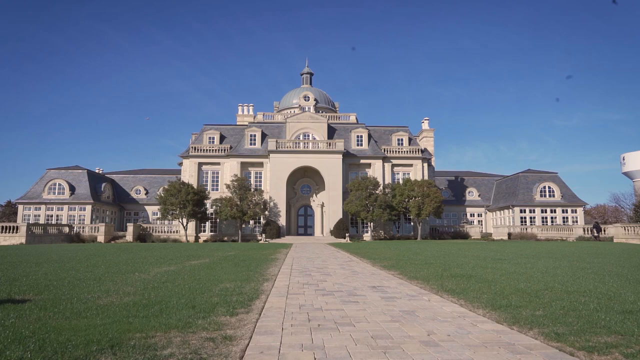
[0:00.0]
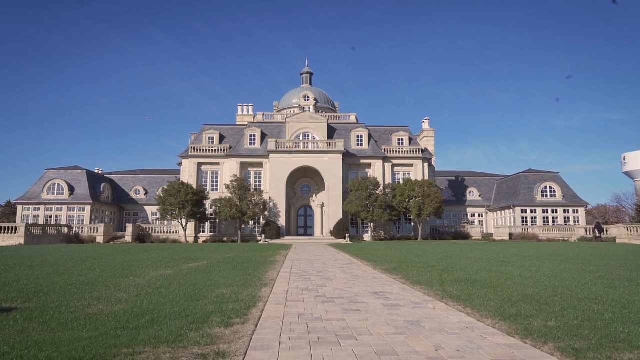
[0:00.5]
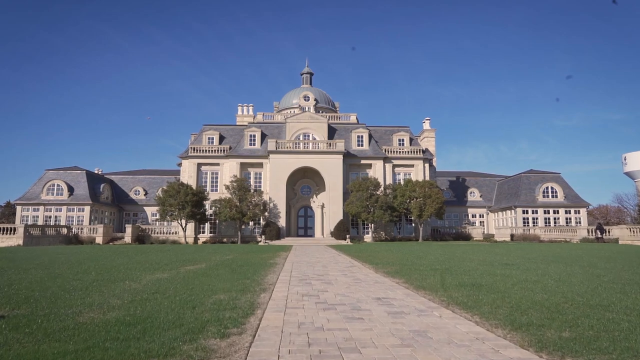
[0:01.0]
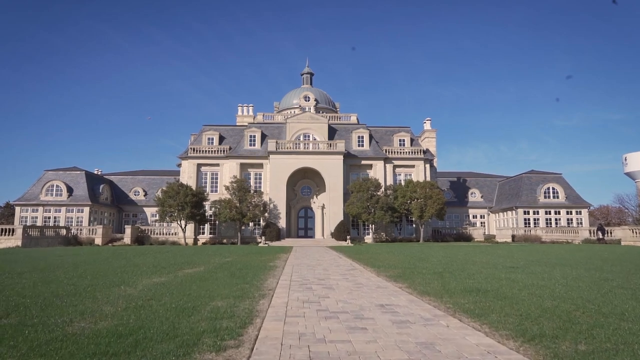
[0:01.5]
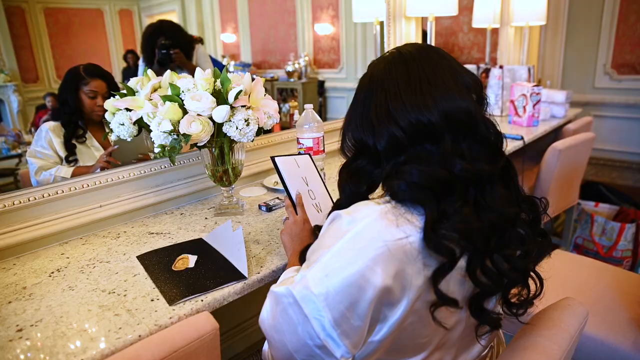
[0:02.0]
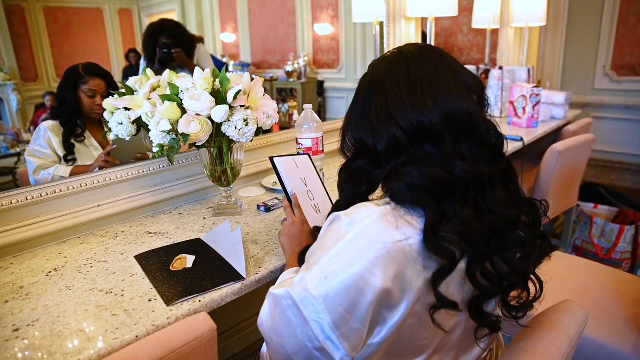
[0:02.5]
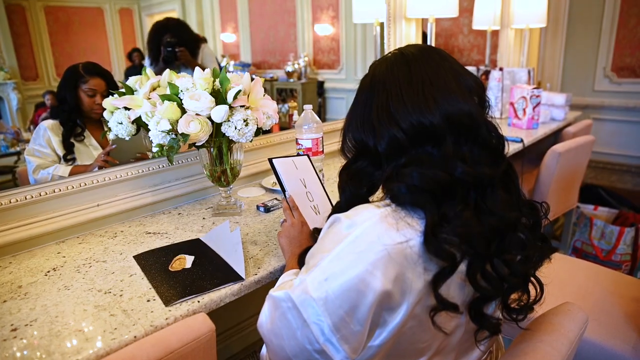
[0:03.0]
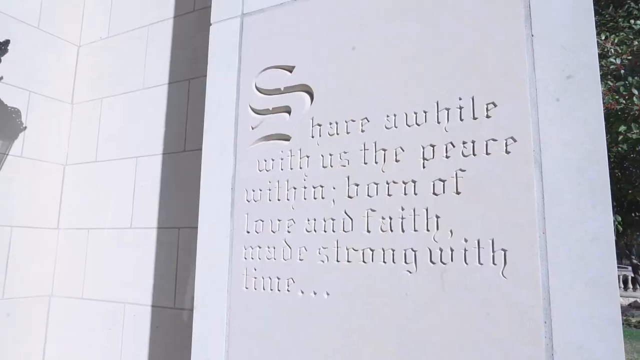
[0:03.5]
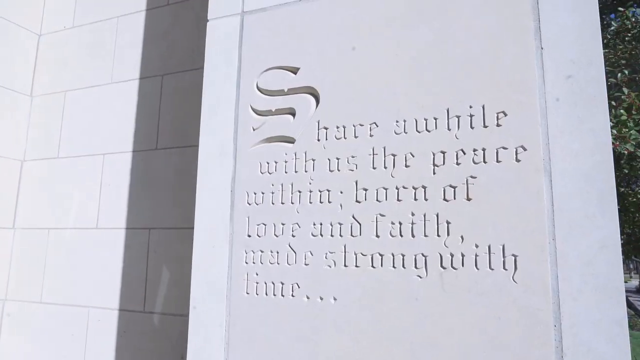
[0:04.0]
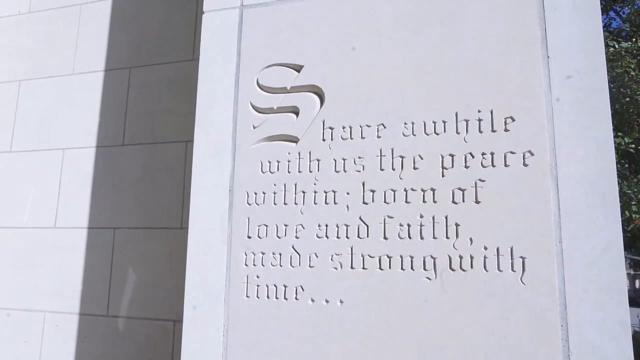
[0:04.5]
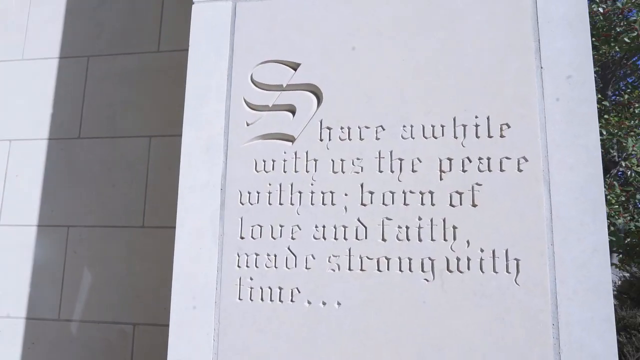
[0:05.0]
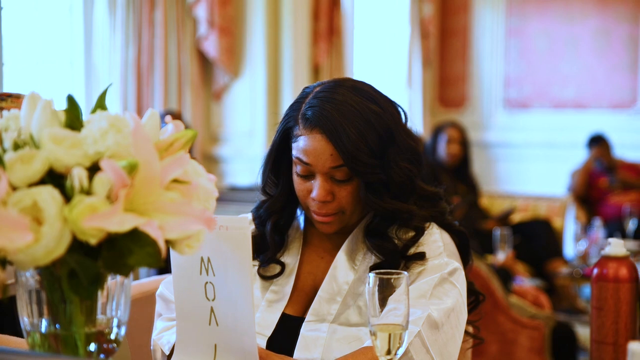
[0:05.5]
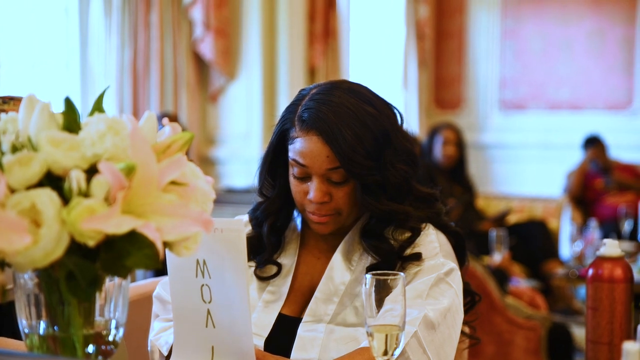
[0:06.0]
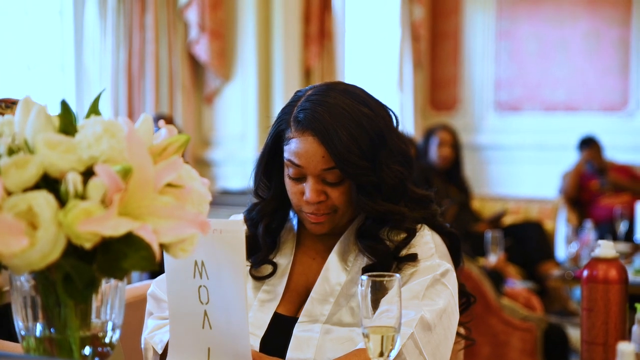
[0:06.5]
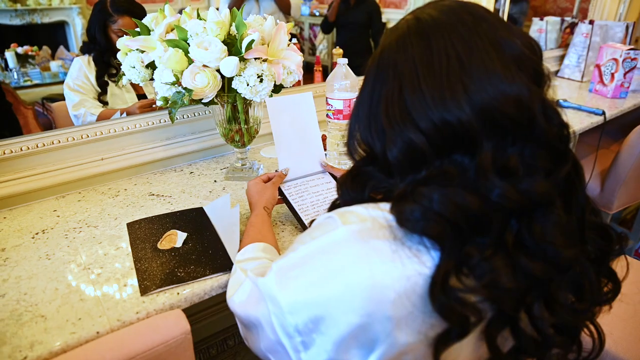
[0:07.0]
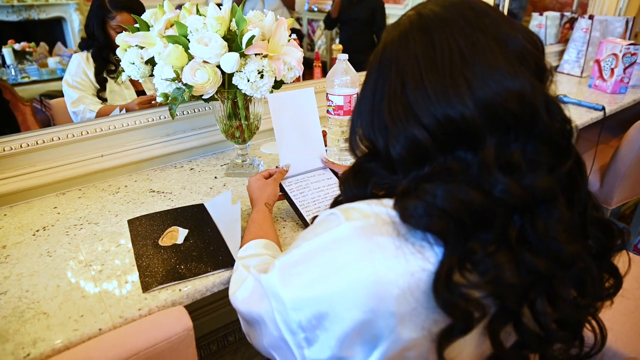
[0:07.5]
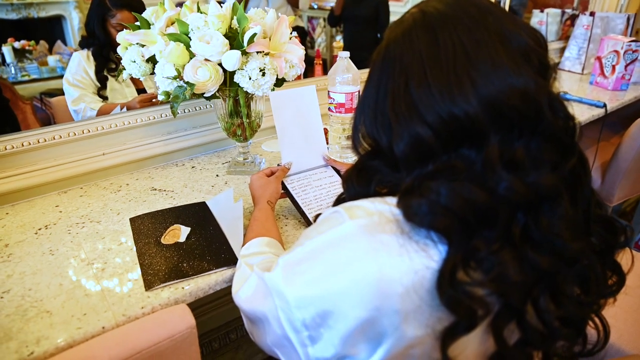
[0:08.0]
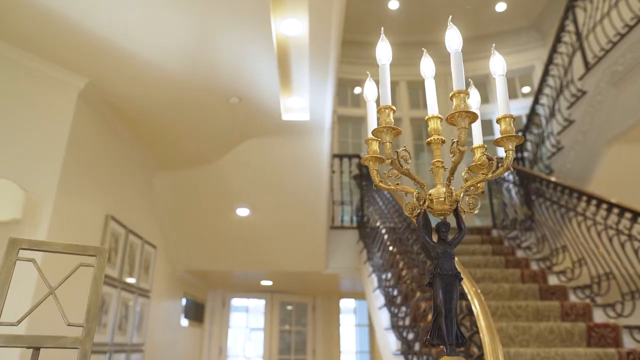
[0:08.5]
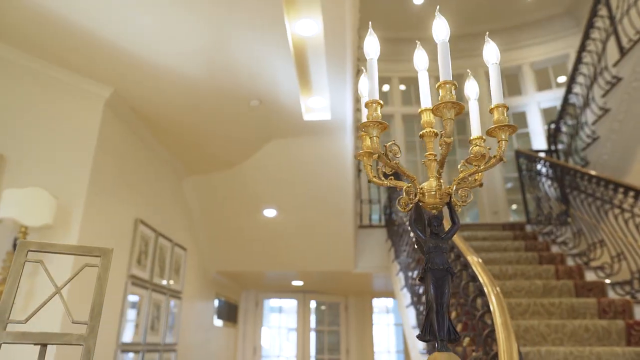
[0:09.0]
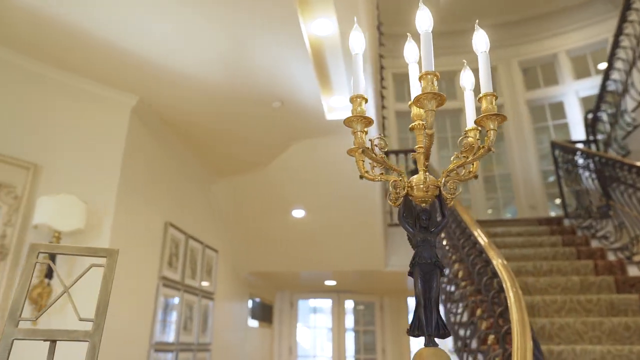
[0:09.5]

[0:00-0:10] The video opens on the facade of a large mansion with a central entrance, an east wing and a west wing on either side, and trees in front. There appears to be a tower at the top, and sprawling lawns with a paved path lead to a large glass doorway at the front. It looks like a venue possibly used for weddings or special events. A lady, probably the bride, sits at a marble dressing table in front of a large mirror, reading something that says "I vow"; she seems to be going over her wedding vows. In front of her is a glass vase with white flowers. In the background some ladies, probably family members, are sitting, and one lady bends down to take a photograph of the bride with a camera. The bride has long black hair and is wearing what looks like a bathrobe, not yet dressed in her wedding dress. Next, a stone outside the front of the venue, which looks like white marble, bears words including "the peace within, born of love and faith, made strong with time". The bride is quite upset, apparently crying tears of joy. A golden chandelier appears, and the camera pans up towards a winding staircase leading to the second level of the house.